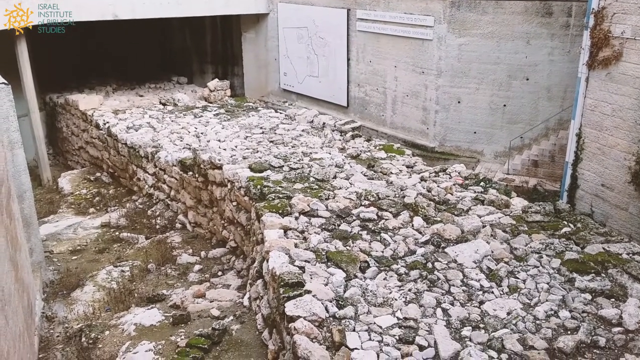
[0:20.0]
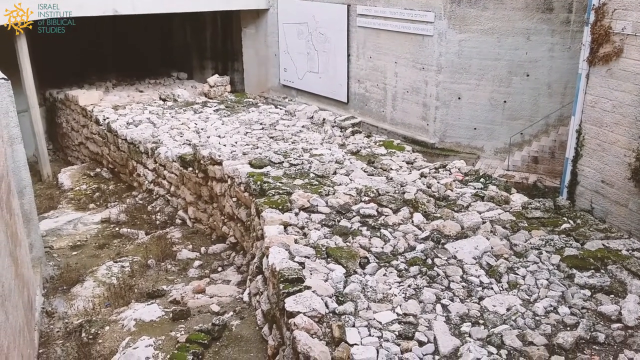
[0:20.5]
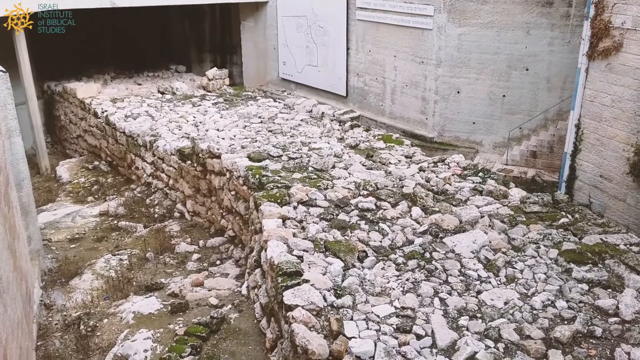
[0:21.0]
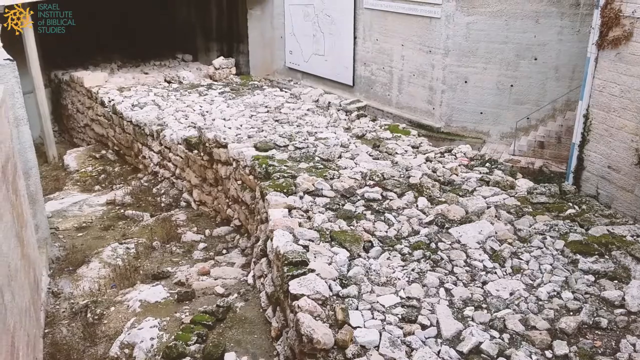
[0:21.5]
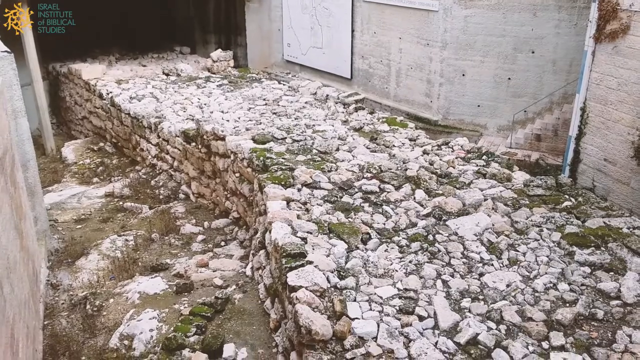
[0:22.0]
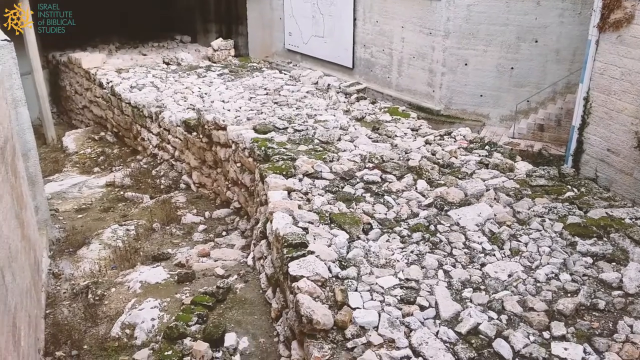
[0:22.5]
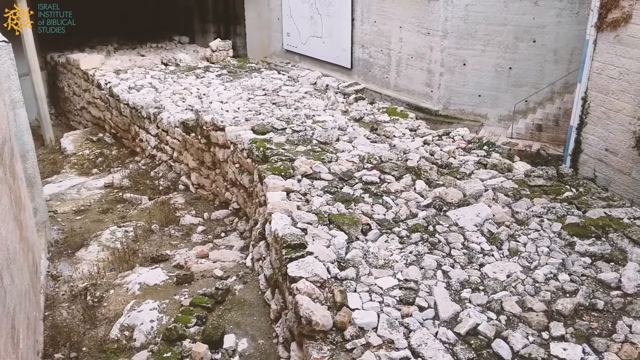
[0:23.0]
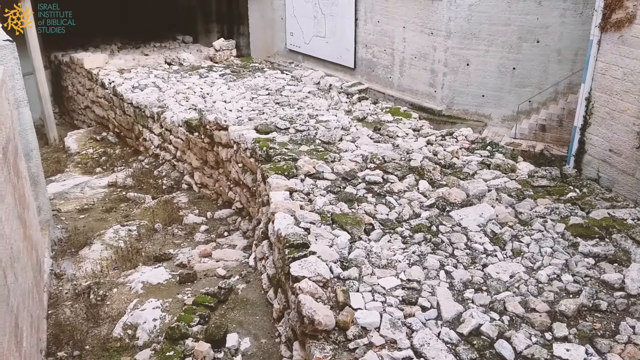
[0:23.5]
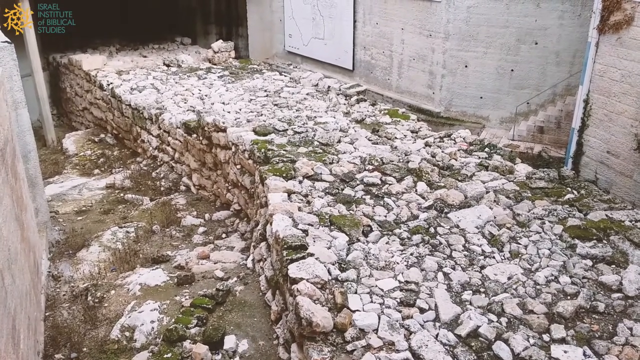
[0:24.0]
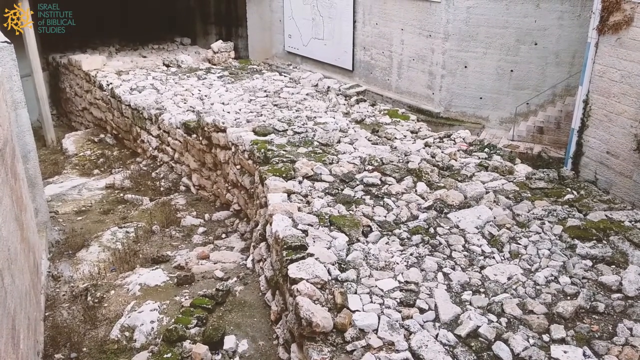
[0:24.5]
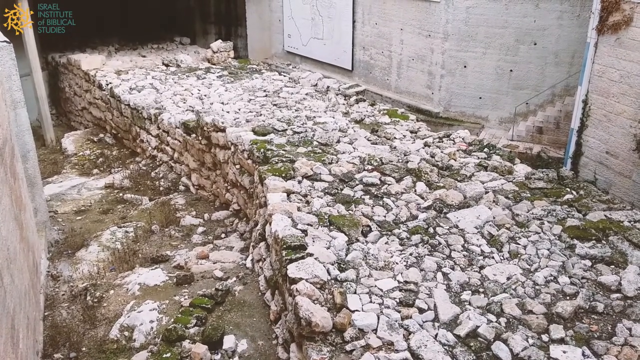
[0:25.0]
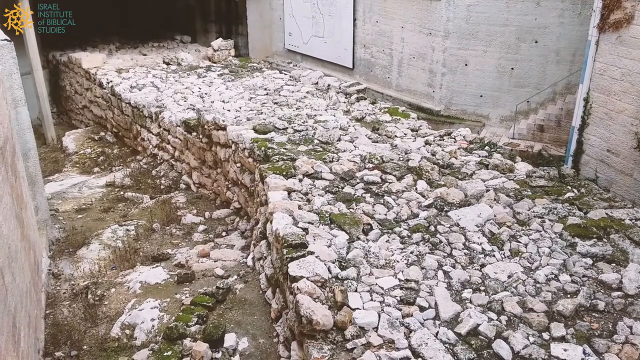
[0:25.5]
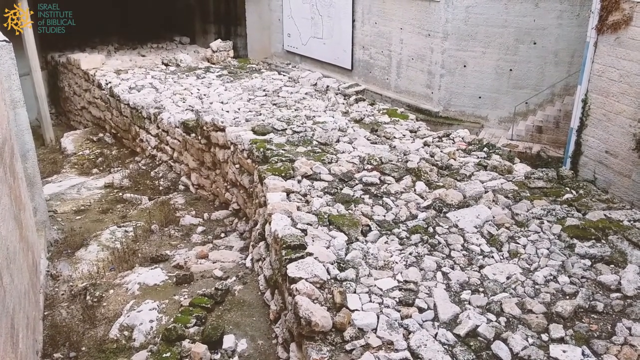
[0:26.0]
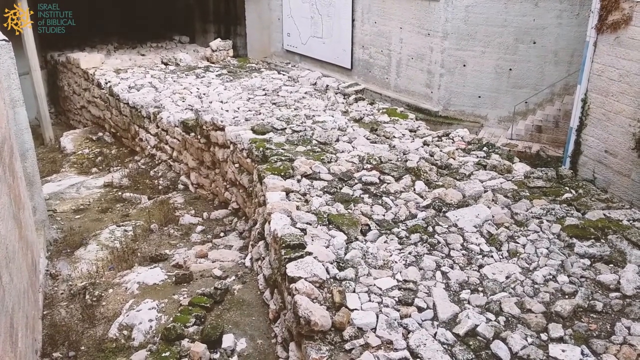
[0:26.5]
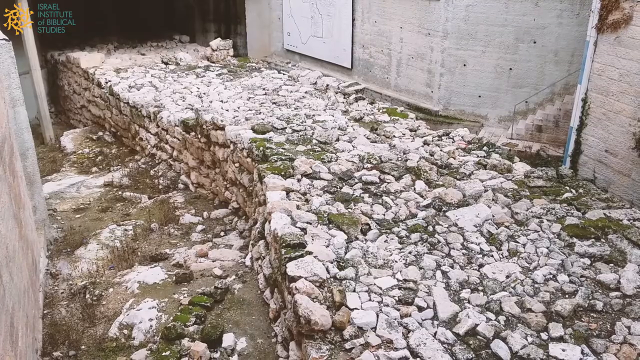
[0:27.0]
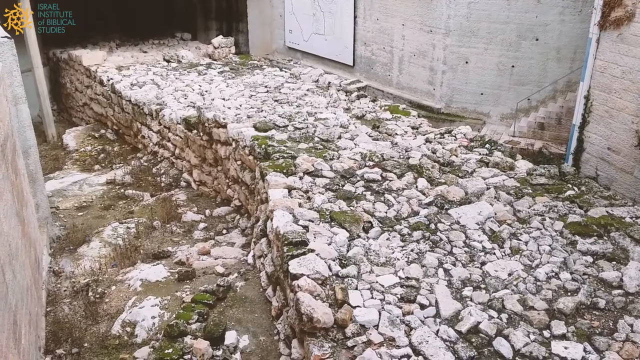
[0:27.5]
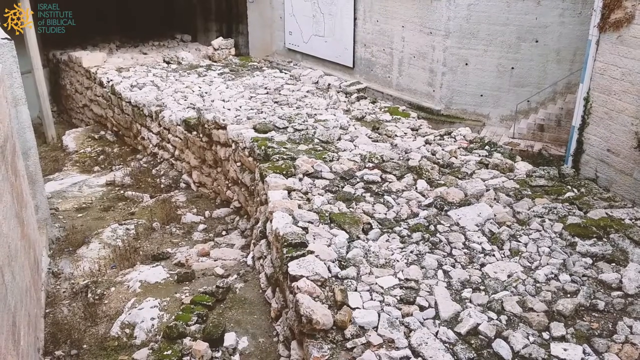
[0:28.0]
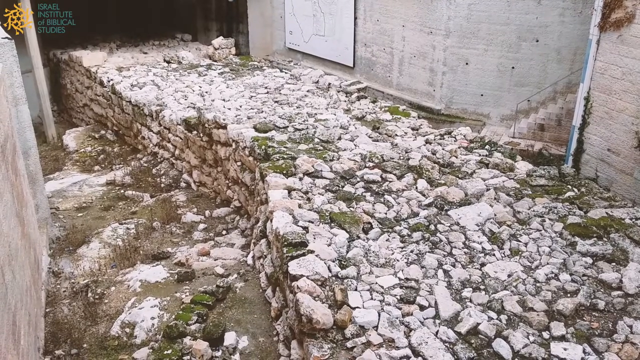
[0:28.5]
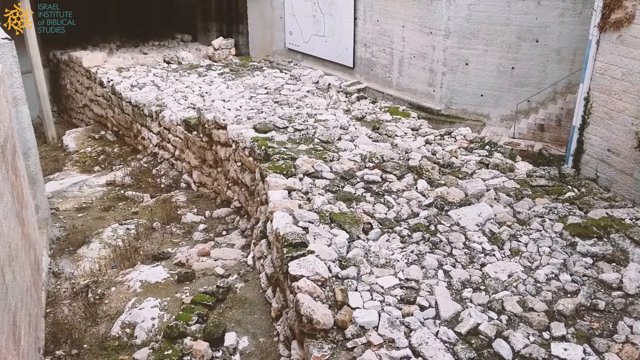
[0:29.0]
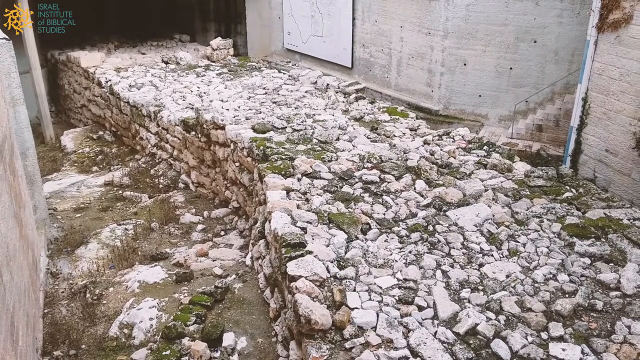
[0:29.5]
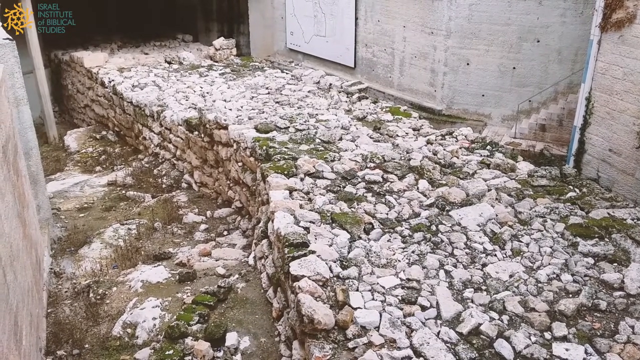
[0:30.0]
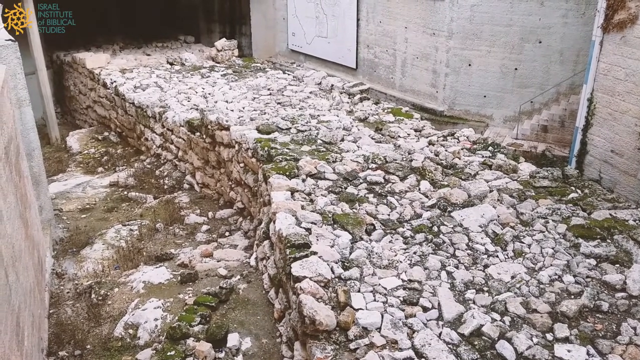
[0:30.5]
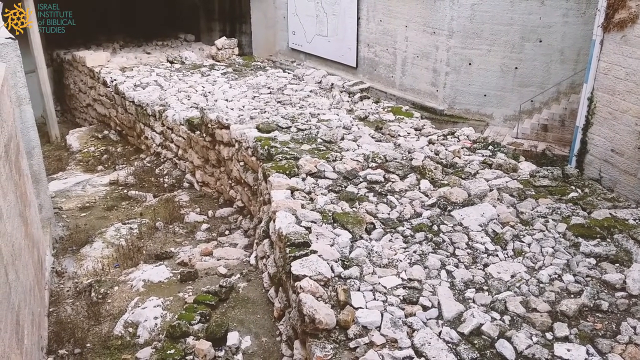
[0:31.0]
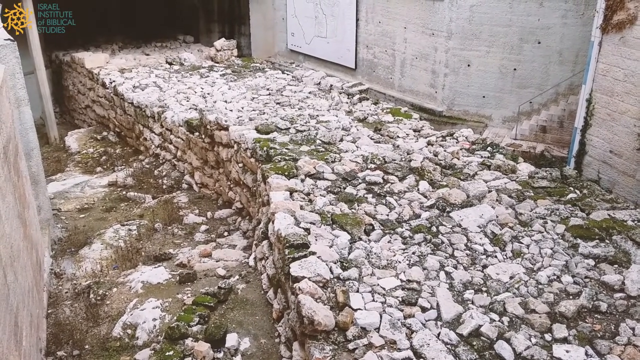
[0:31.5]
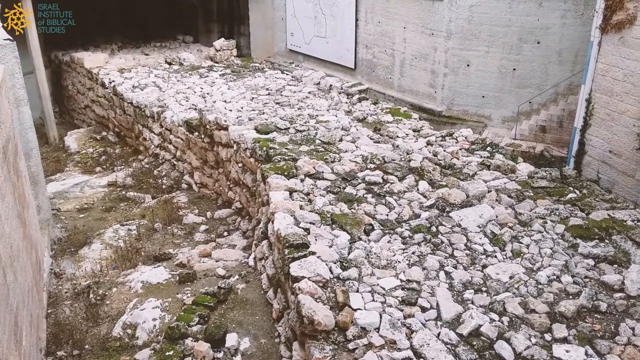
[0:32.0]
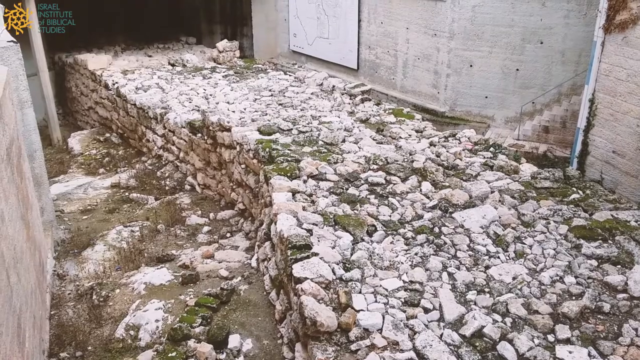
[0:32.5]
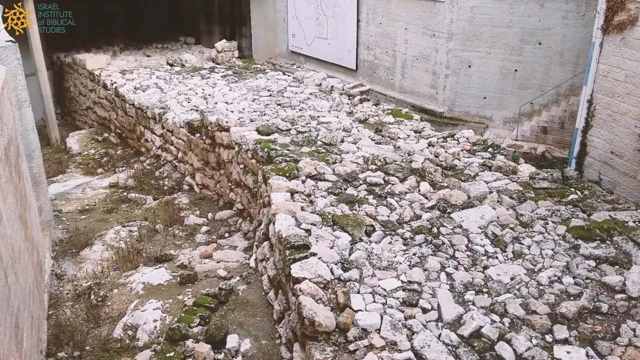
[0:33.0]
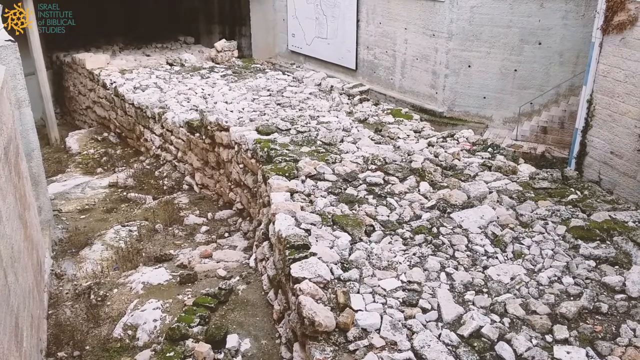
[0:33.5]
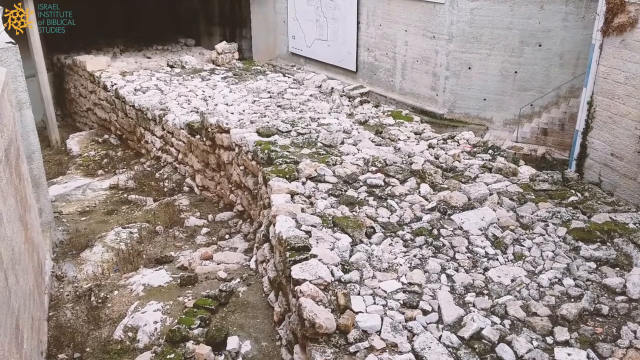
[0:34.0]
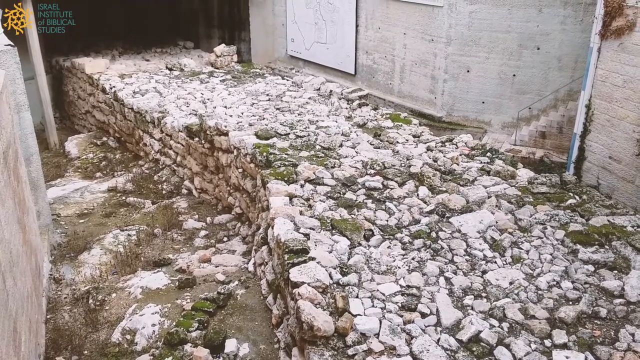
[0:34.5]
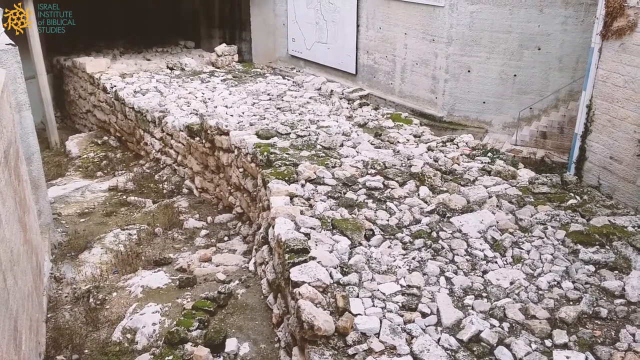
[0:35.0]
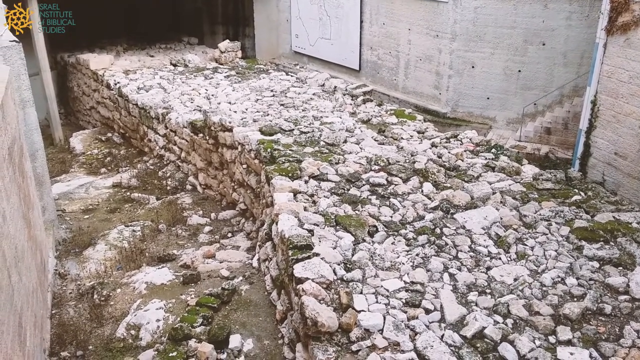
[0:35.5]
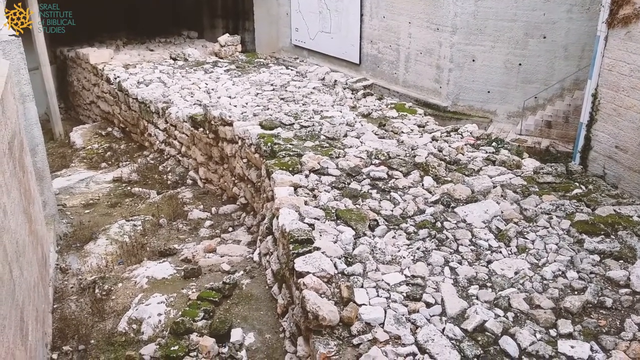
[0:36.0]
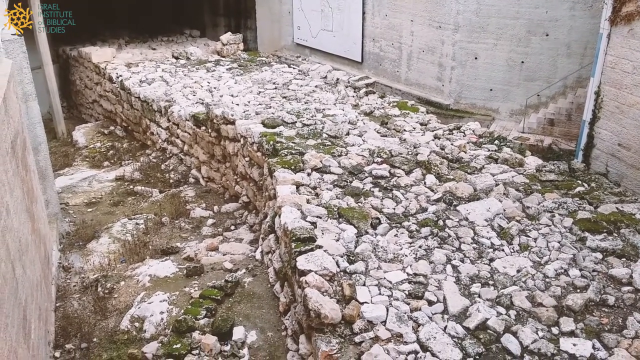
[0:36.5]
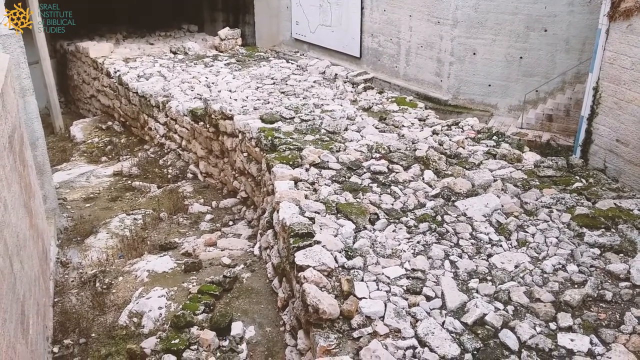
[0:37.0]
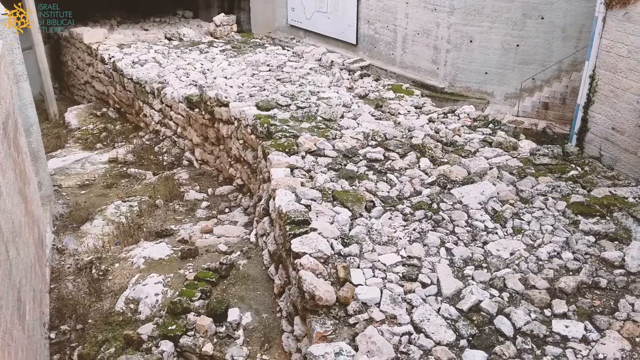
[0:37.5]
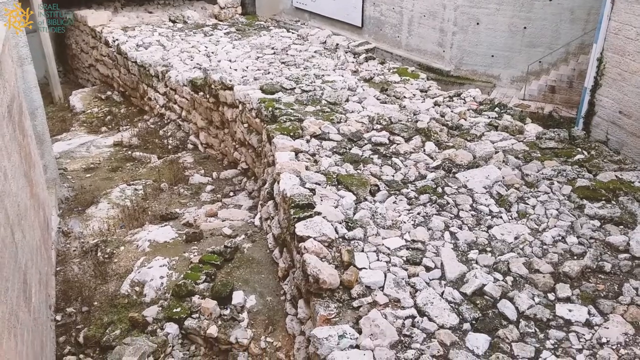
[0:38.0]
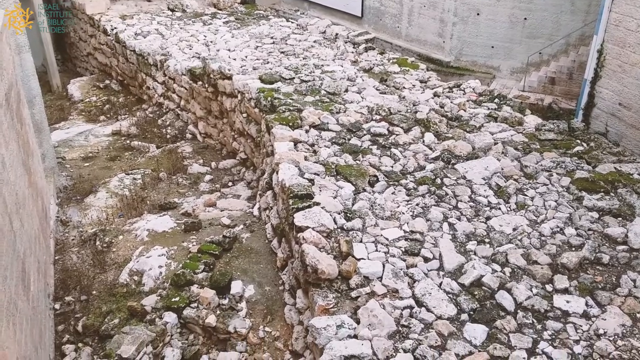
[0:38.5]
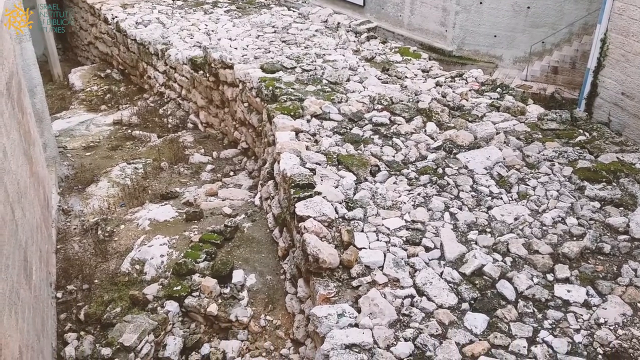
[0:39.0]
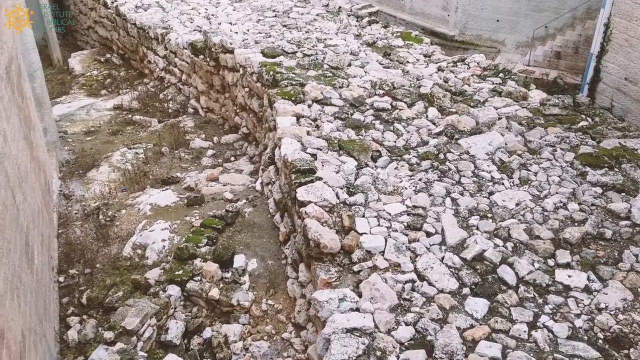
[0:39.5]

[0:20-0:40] Another view shows the stone at the bottom of the staircase and overpass, which also goes over a portion of it. The area is not easy to walk on: the stones are very big and shaped differently, and the surface is not smooth. It is outside what might be an apartment building or possibly an office building. The stone is in what is sort of a raised lawn area under the overpass and at the bottom of the stairway, and it looks like it might be leftovers from some sort of construction project from many decades ago that were never taken away.